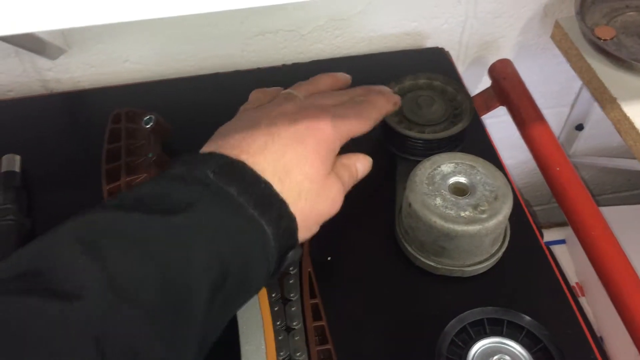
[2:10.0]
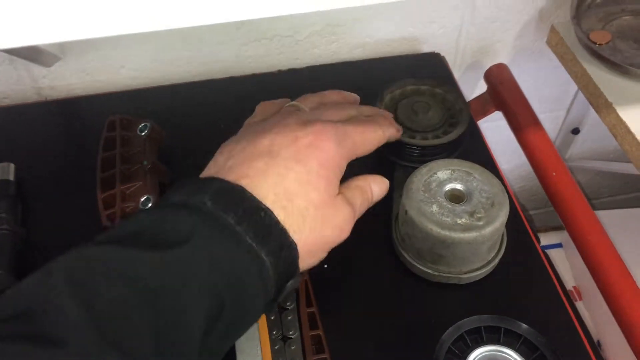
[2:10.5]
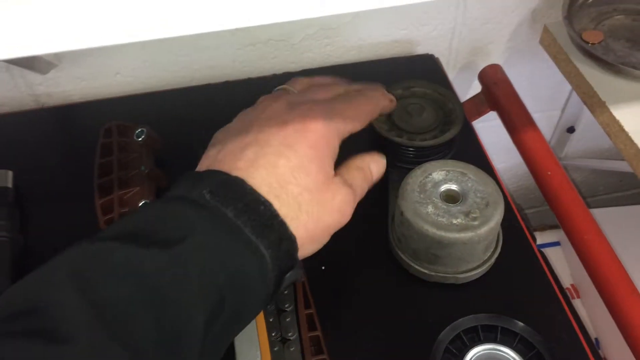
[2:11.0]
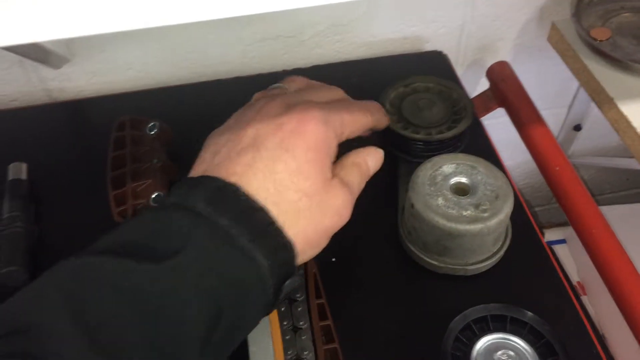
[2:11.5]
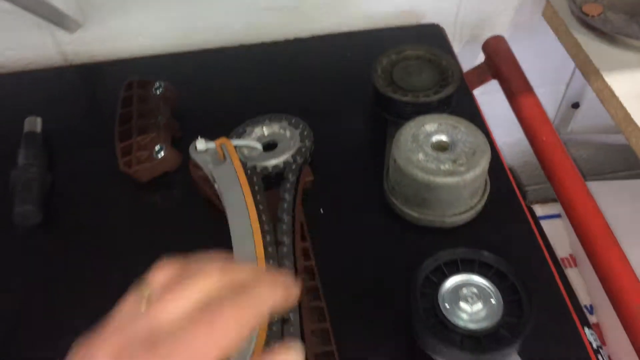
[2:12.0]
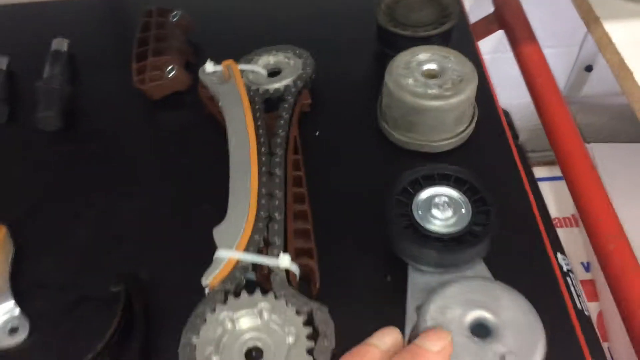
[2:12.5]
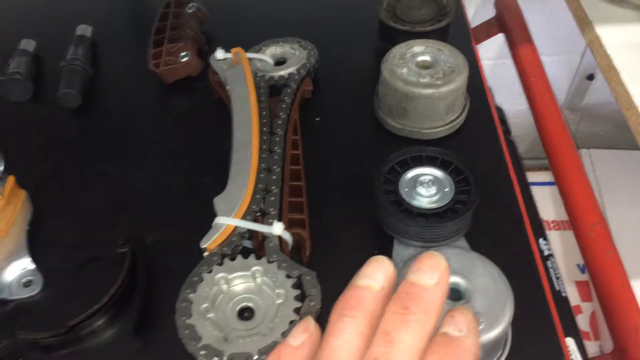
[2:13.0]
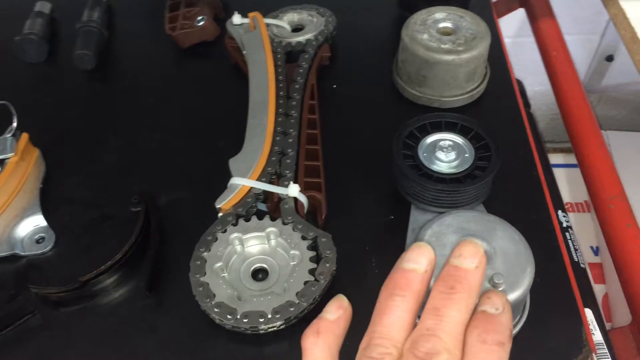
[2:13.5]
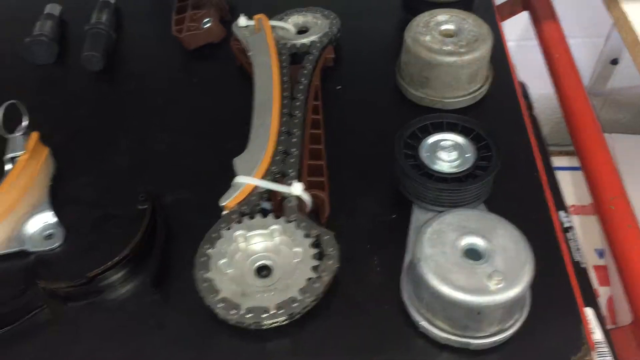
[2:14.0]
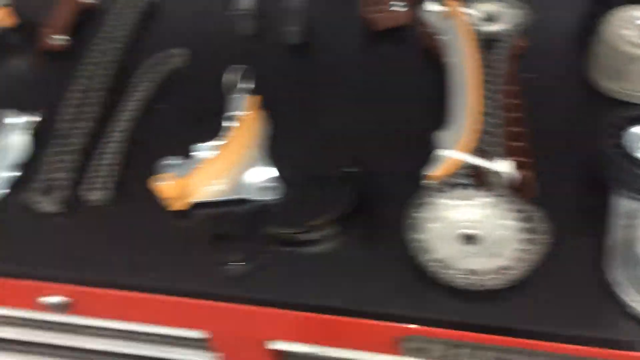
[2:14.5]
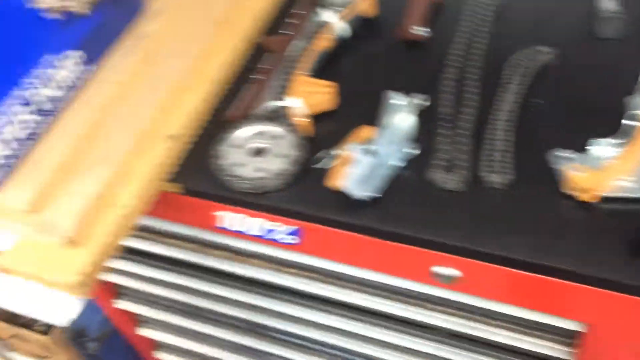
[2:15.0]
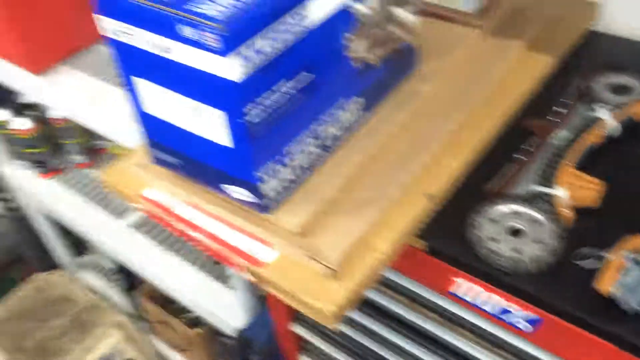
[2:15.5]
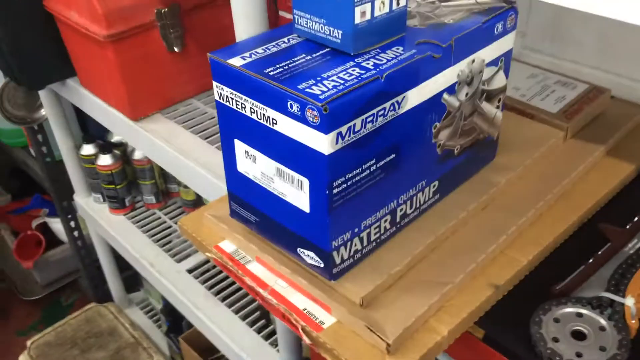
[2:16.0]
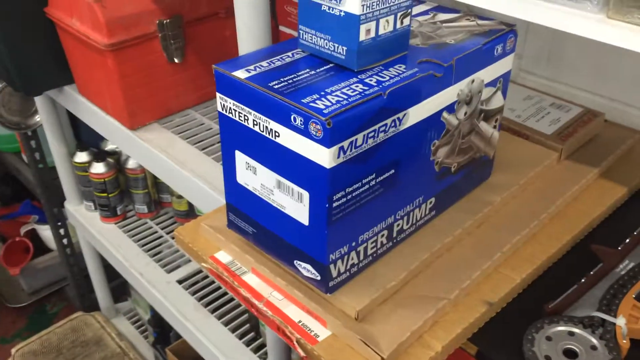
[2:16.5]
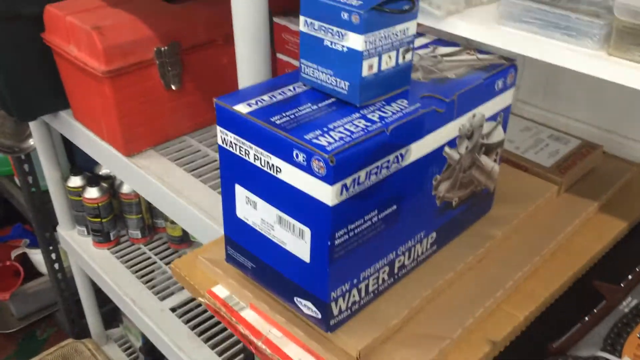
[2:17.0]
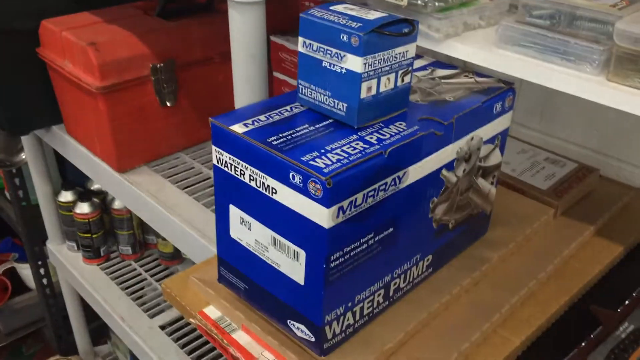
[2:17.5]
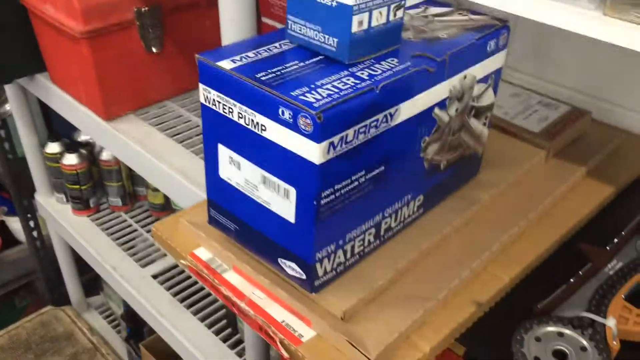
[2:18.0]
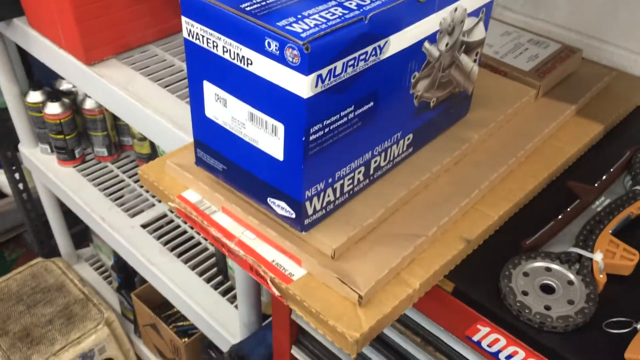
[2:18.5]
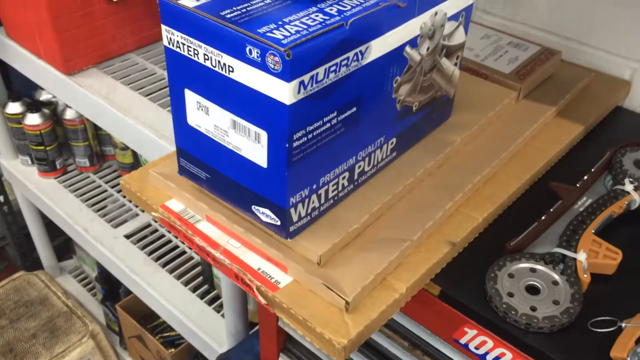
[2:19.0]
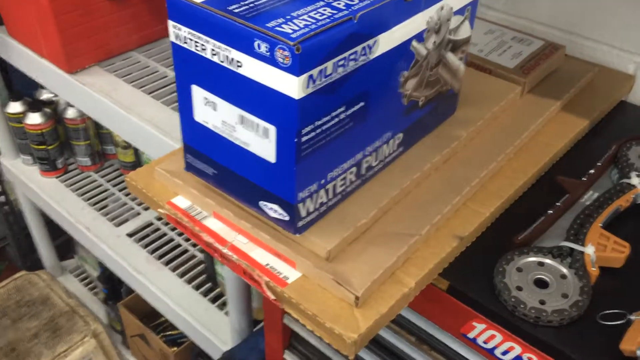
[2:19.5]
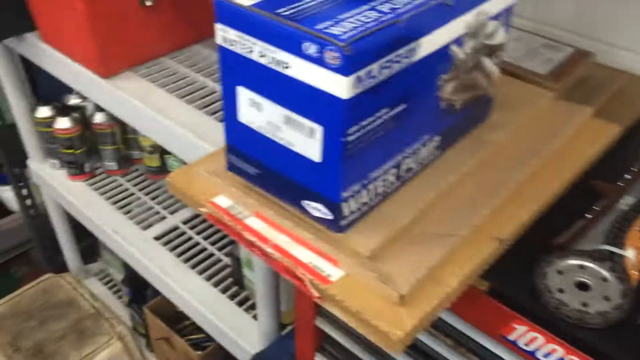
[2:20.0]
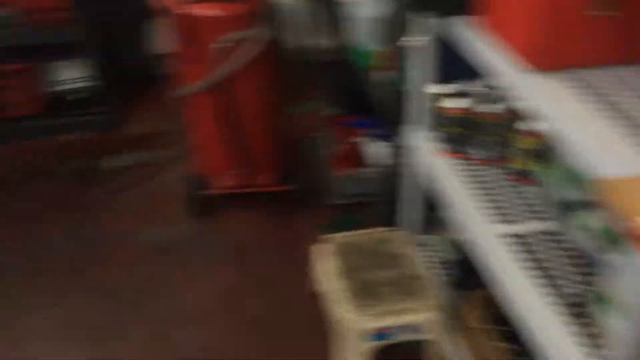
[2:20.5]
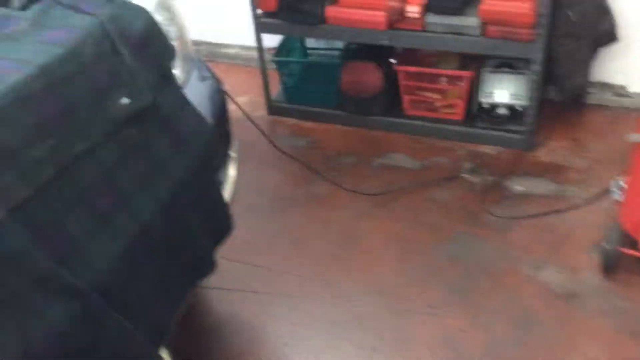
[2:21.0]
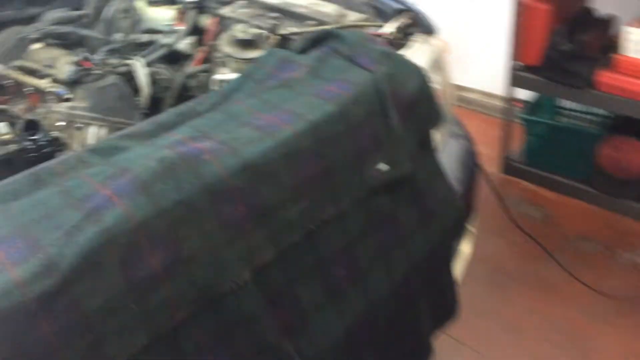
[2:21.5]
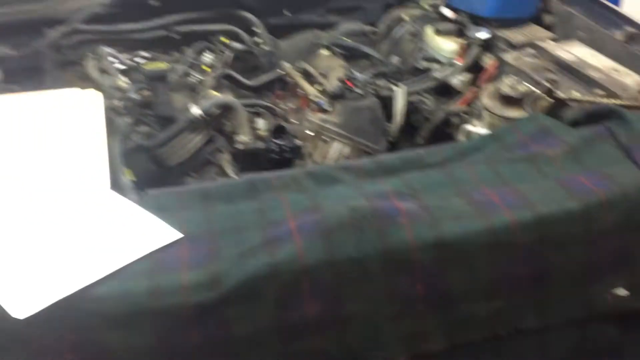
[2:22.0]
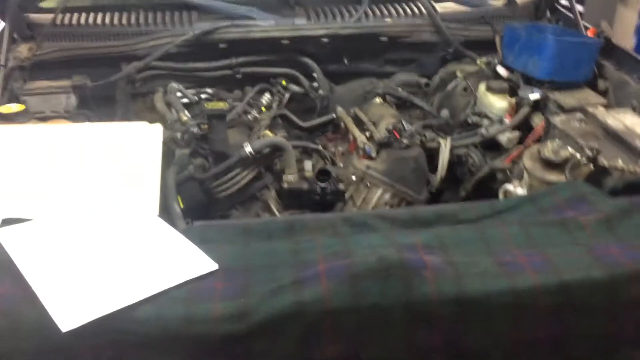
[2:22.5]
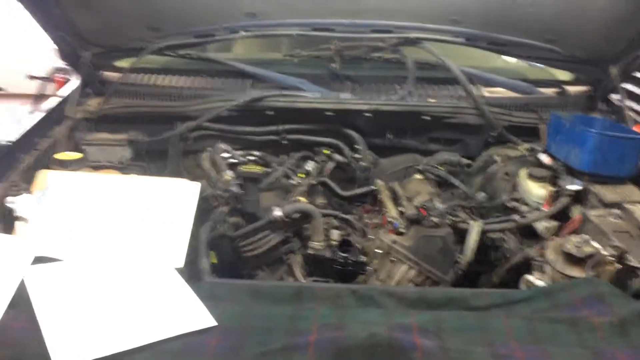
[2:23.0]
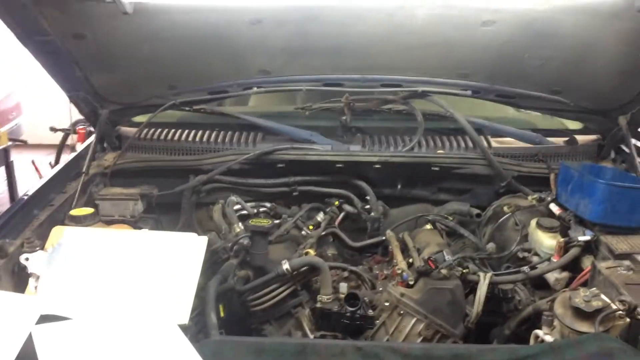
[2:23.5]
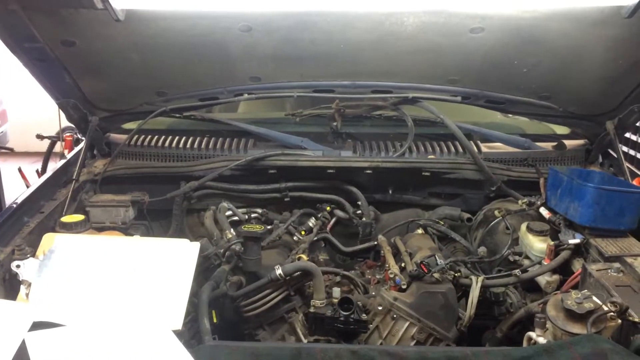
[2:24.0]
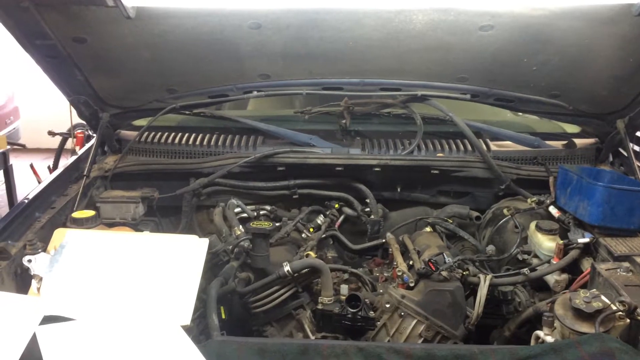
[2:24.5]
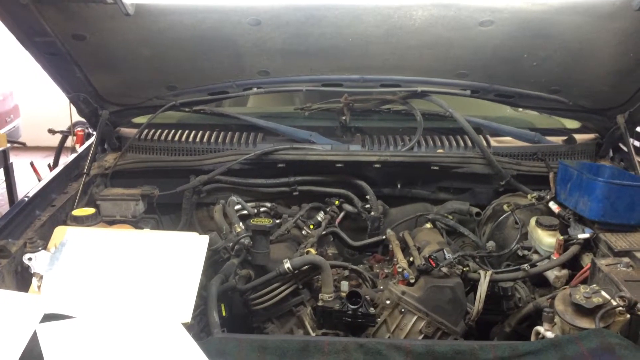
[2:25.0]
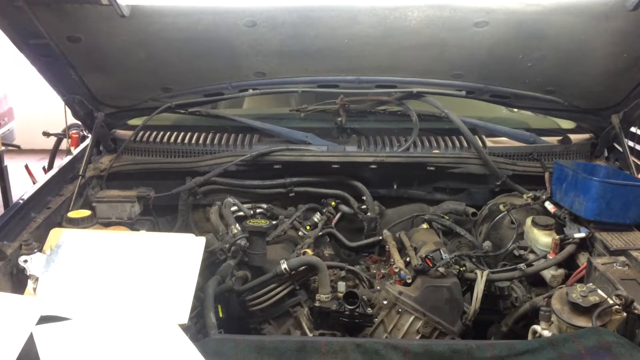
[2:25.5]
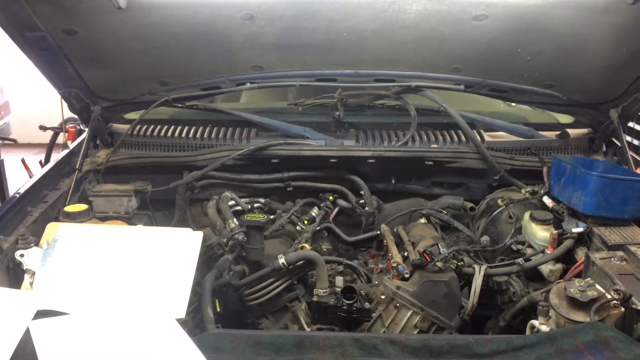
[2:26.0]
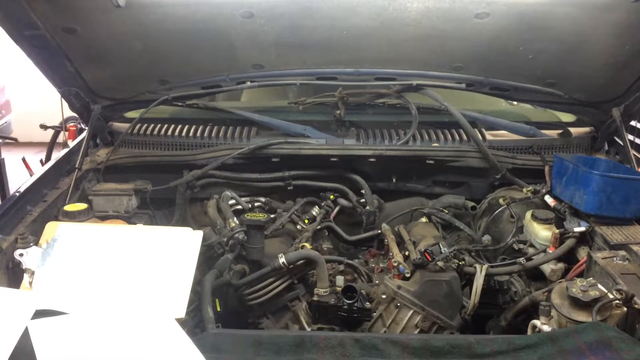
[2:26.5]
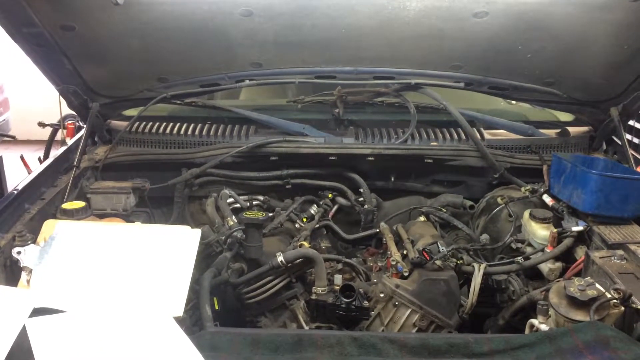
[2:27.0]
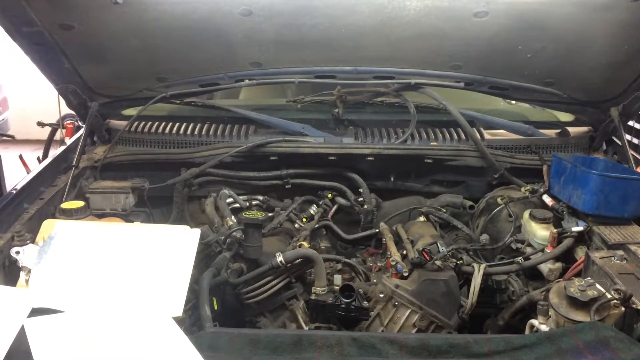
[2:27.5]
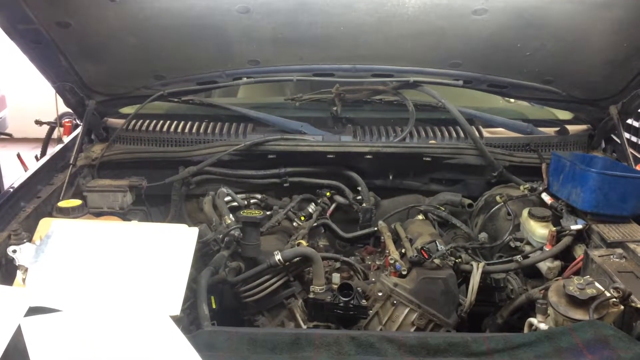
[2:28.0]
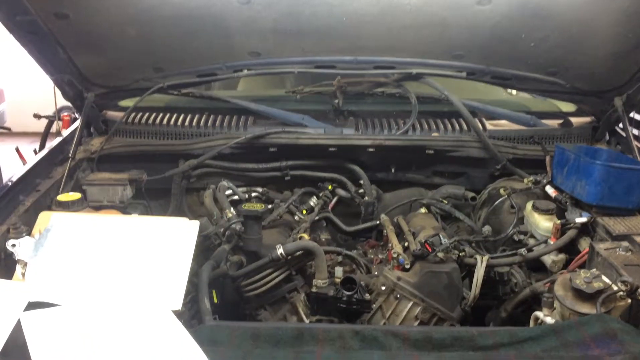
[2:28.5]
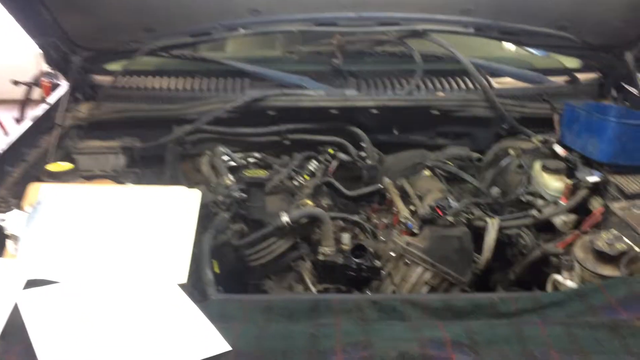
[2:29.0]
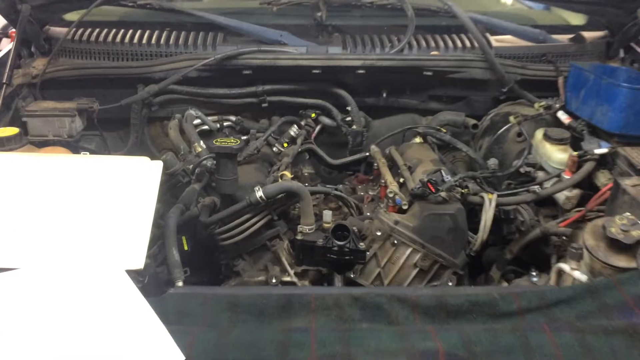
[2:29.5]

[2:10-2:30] The man uses his left hand to move the circular object, which seems like a wheel, back and forth to show that it moves. He uses his hands to describe what is on the right side of the table: more circular tubes and another device that the chain is attached to. He moves the camera left to show the rest of the workshop. Next to the black surface is a wooden surface holding a very big blue box labeled "Murray water pump" and a smaller blue box of the same branding labeled "thermostat", with images of the water pump and the thermostat, some more wording, and a sticker with a barcode on the left side. Behind the wooden surface is a really big red toolbox on a rack, and there are some bottles or cans of car materials. He then moves the camera back left to the hood of the car, showing the entire hood before zooming in toward it.